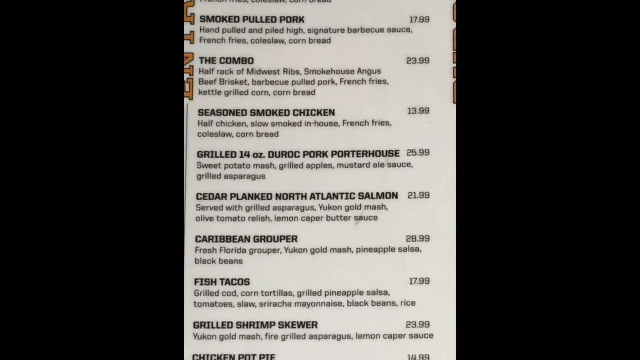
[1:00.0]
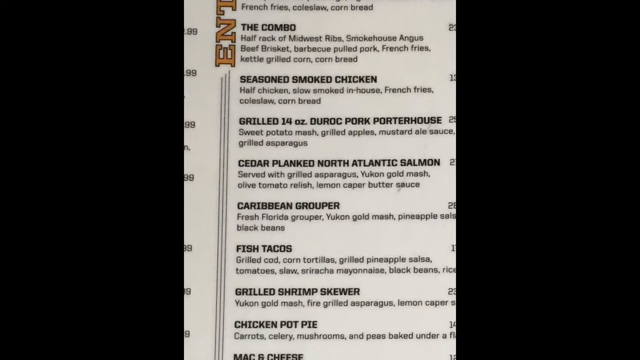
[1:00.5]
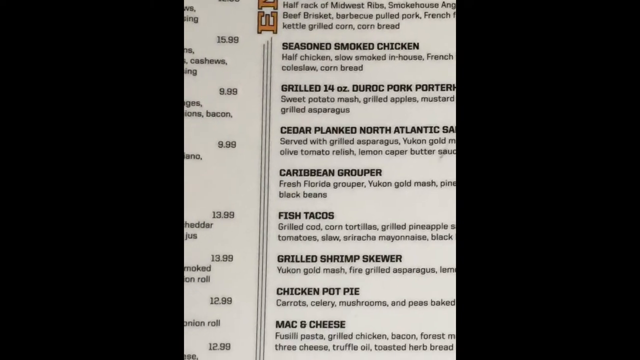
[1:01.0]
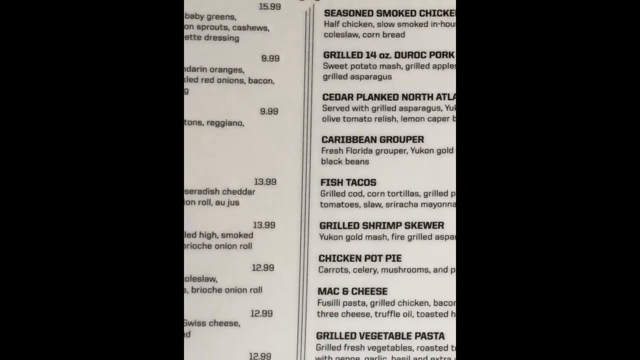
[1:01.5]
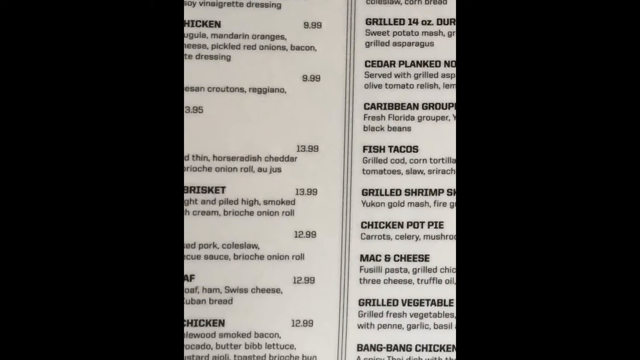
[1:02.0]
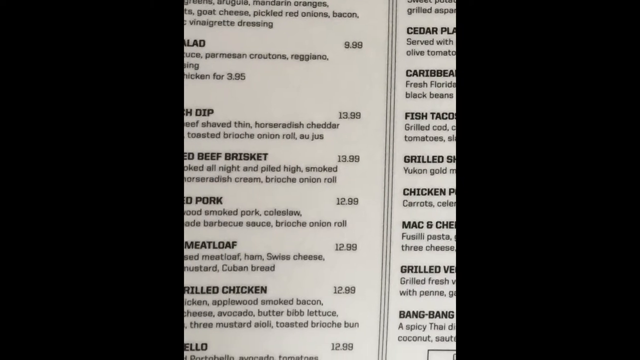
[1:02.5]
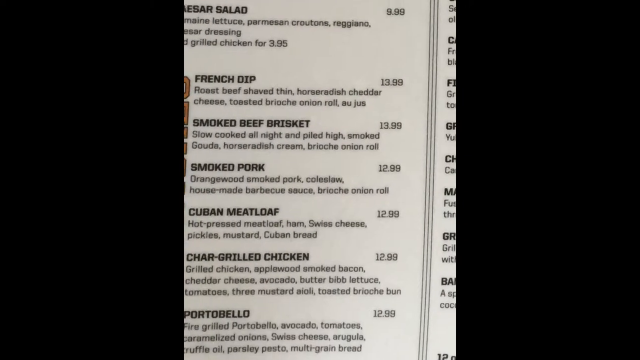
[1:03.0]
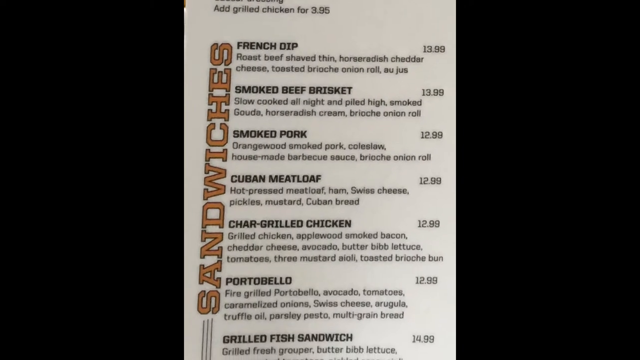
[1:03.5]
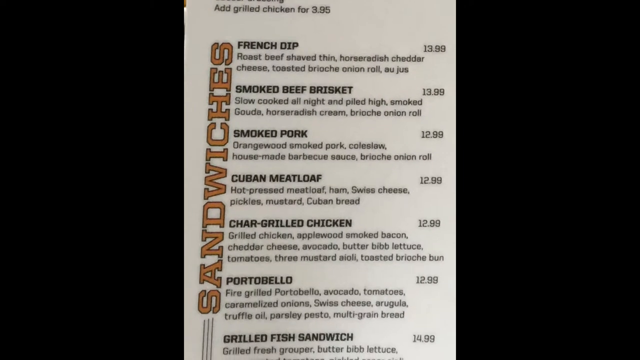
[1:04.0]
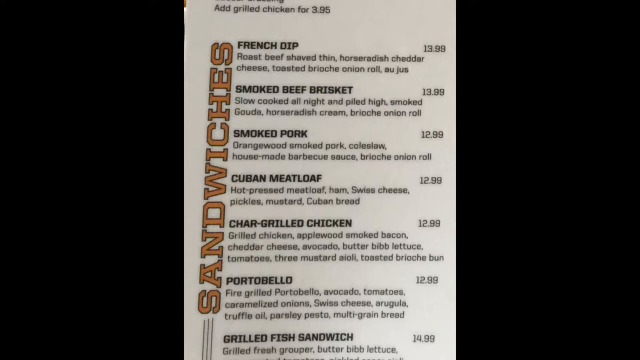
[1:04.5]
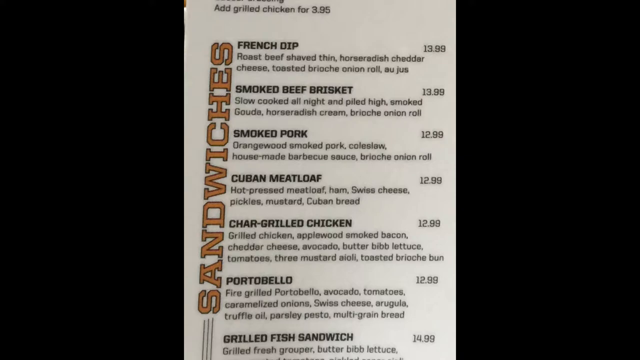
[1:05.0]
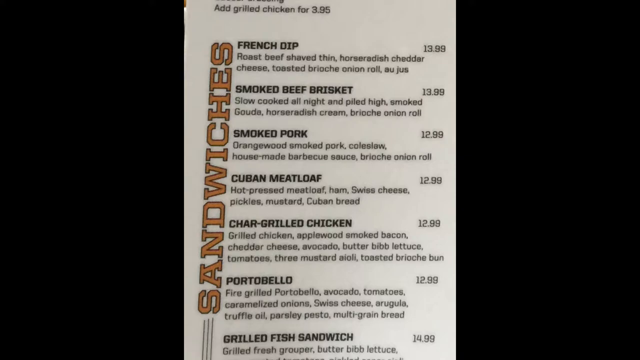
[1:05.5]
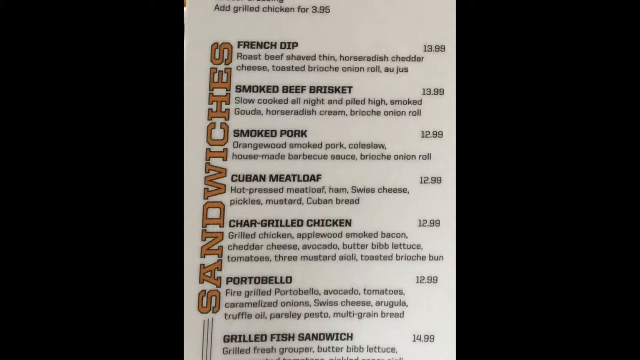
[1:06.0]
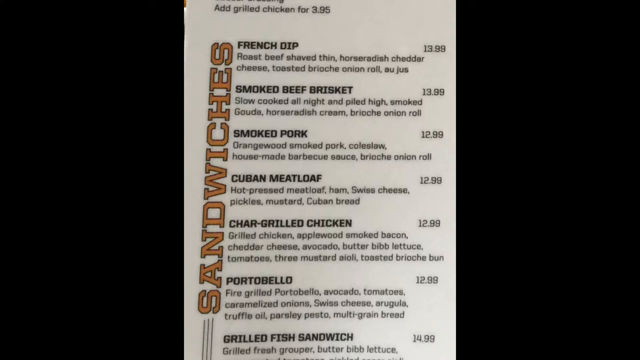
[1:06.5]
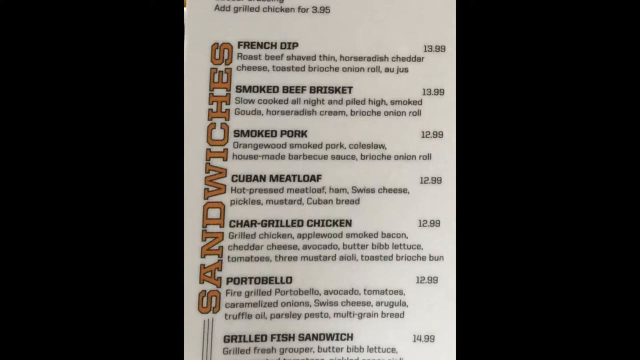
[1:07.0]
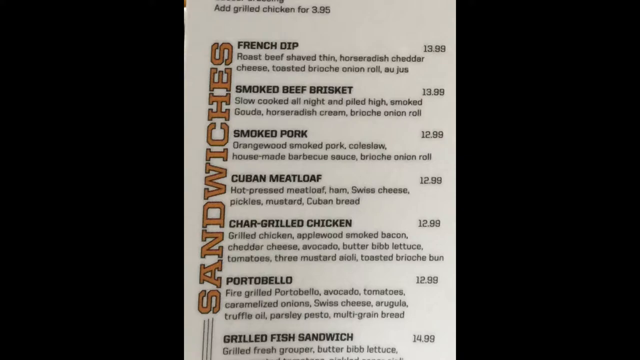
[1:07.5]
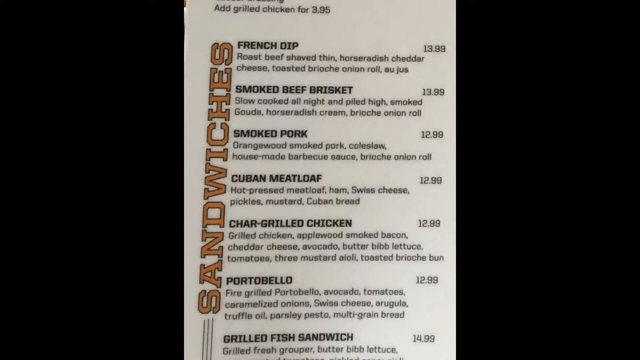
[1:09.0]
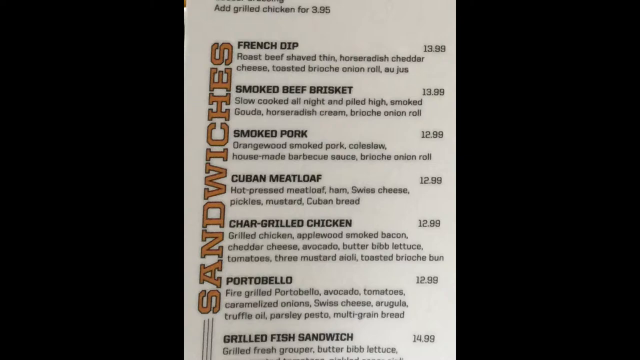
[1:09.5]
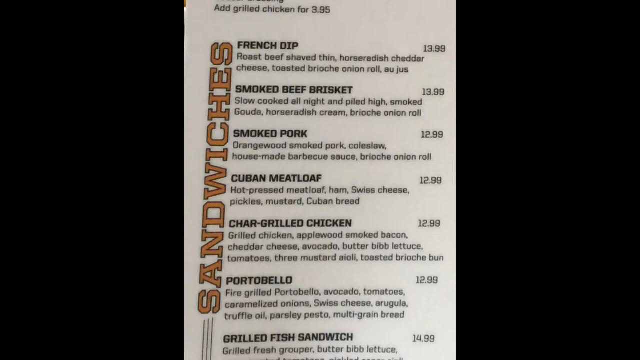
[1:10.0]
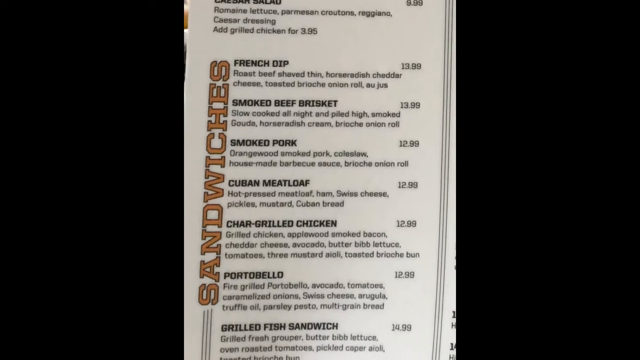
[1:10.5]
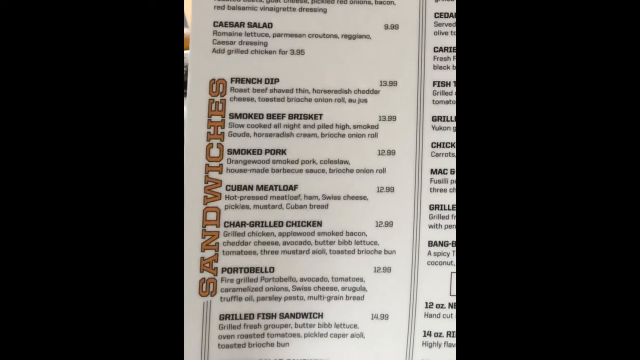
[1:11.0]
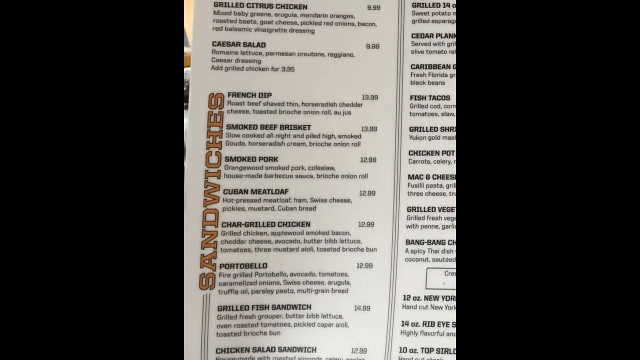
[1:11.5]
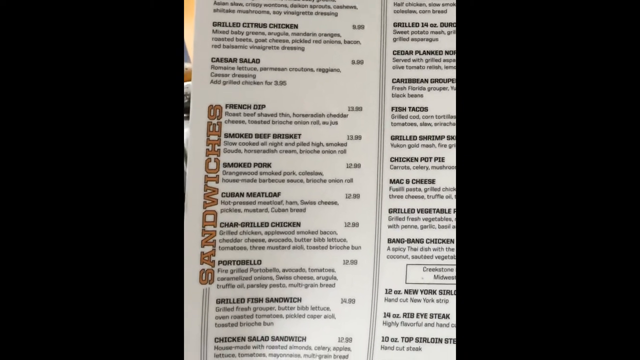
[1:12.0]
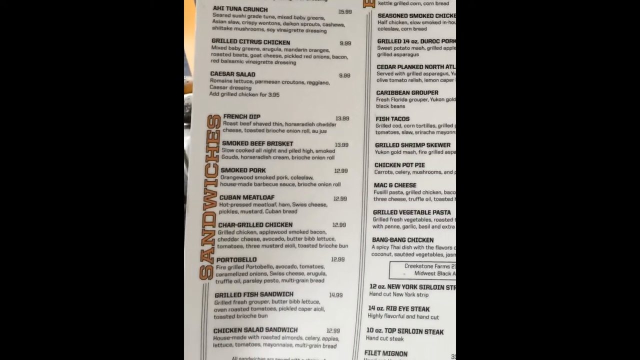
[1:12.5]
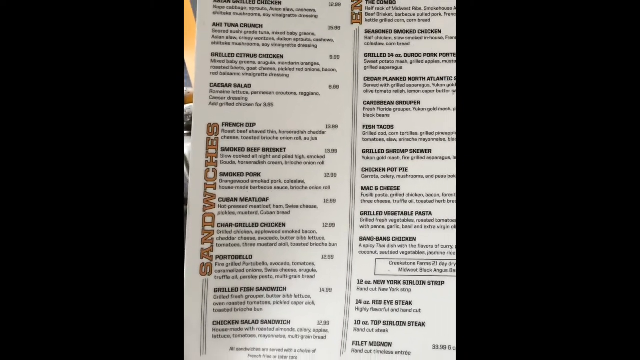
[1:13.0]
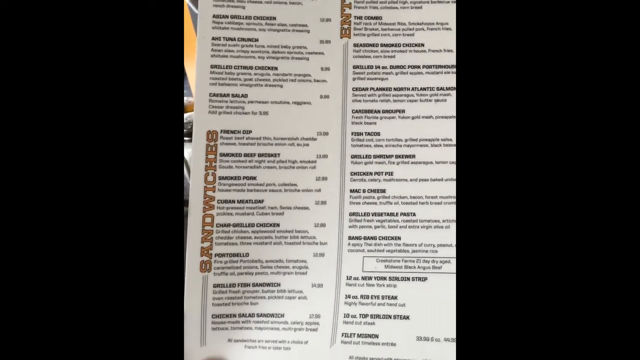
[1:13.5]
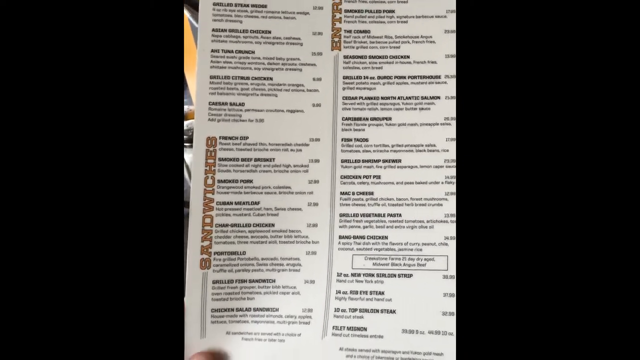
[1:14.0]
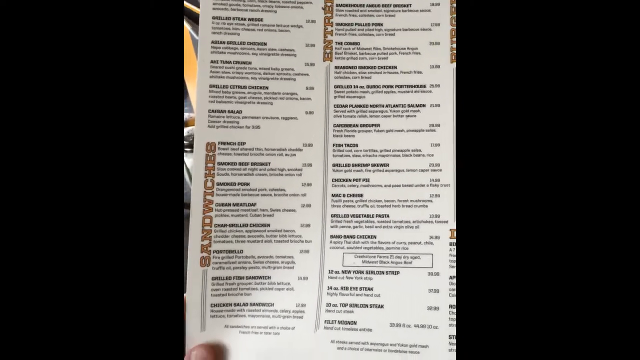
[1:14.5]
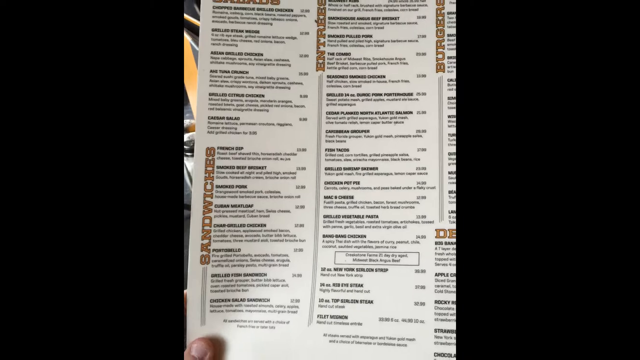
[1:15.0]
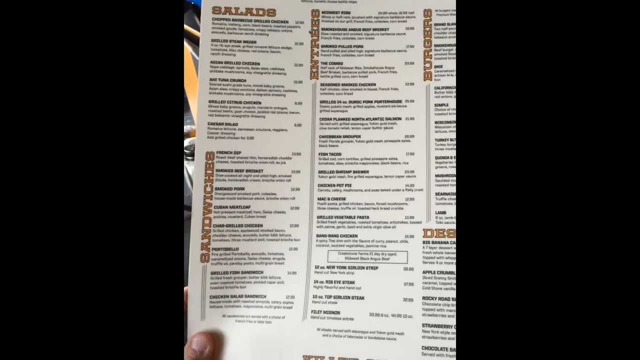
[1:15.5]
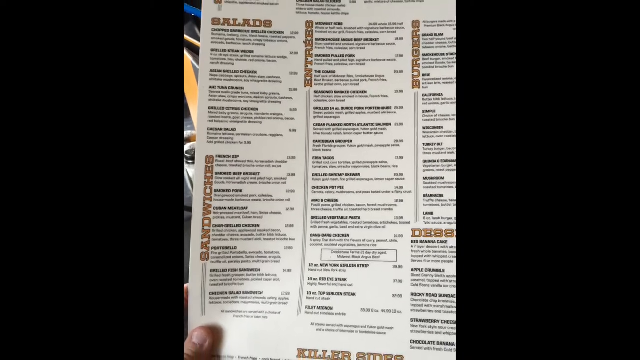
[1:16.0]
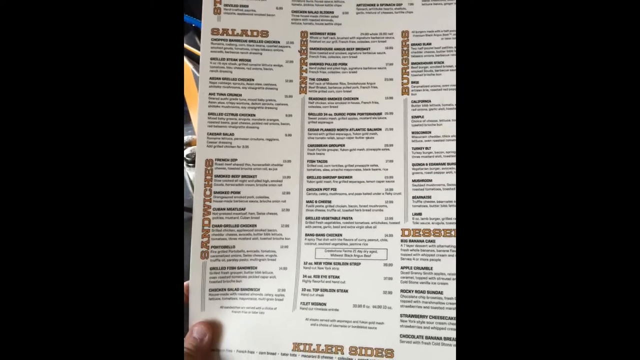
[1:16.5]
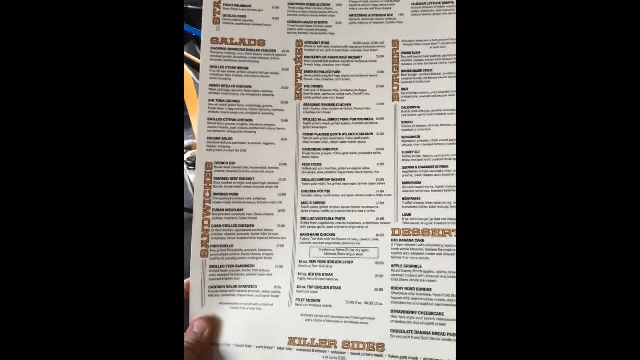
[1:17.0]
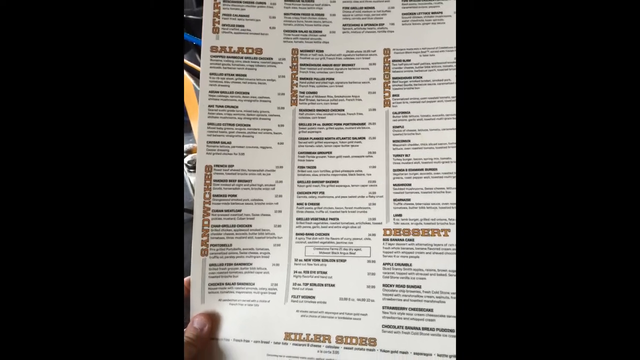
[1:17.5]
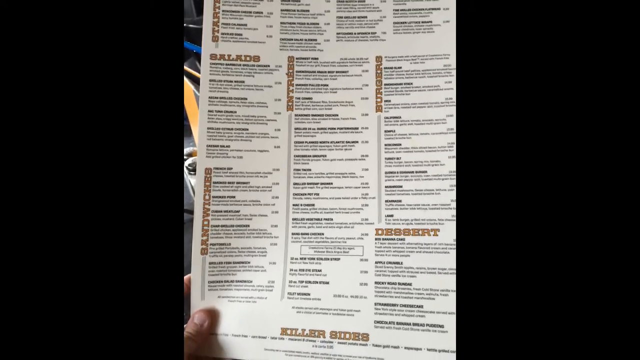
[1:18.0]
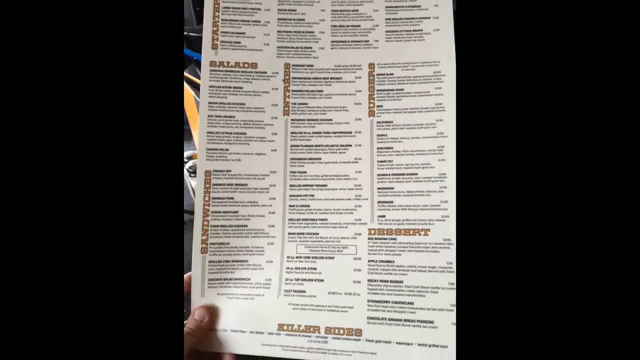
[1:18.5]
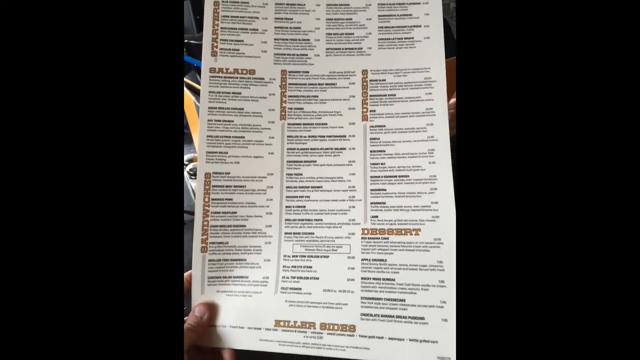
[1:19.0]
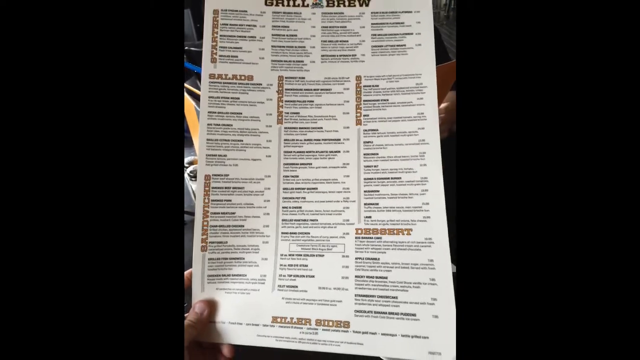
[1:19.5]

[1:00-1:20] Letterboxing appears on the left and right sides, each occupying maybe around 30% of the frame. In the center is a section of a menu, apparently several items pulled from one column. Main items are in bold capital letters with smaller text below. The items include smoked pulled pork for $17.99, the combo for $23.99, seasoned smoked chicken for $13.99, grill 14 ounce duroc pork porterhouse for $25.99, cedar planked North Atlantic salmon for $21.99, Caribbean grouper for $28.99, fish tacos for $17.99, and grilled shrimp skewer for $23.99. The view then scrolls down and left to a sandwich section listing French dip for $13.99, smoked beef brisket for $13.99, smoked pork for $12.99, Cuban meatloaf for $12.99, char grilled chicken for $12.99, and portobello for $12.99.